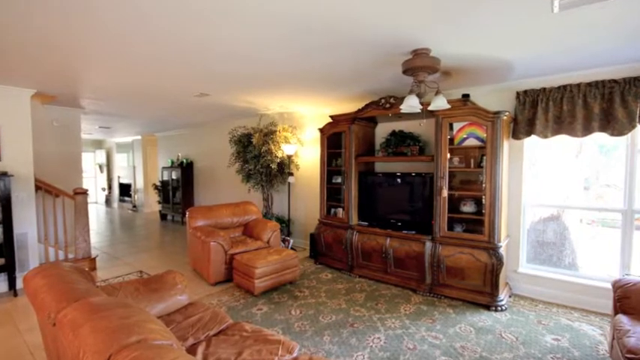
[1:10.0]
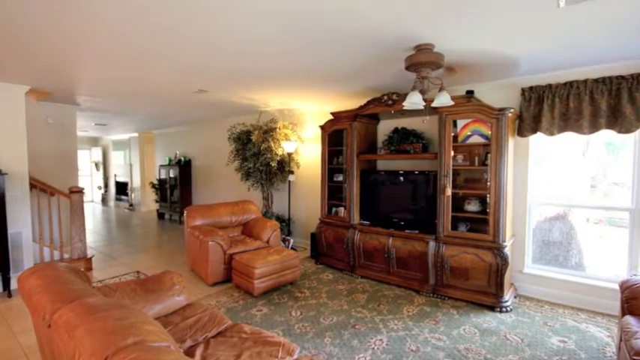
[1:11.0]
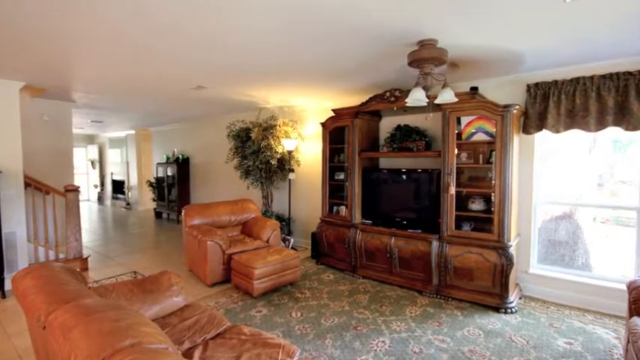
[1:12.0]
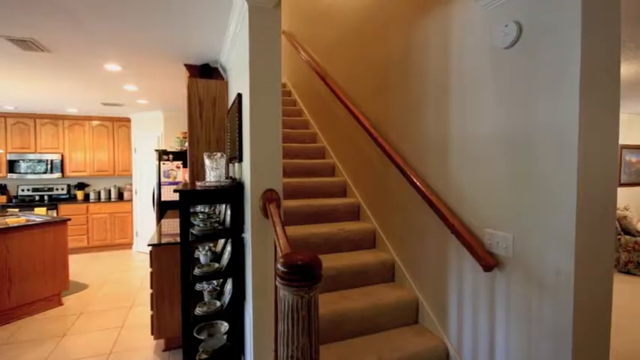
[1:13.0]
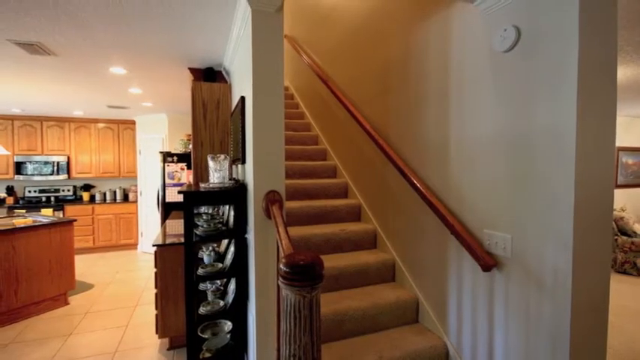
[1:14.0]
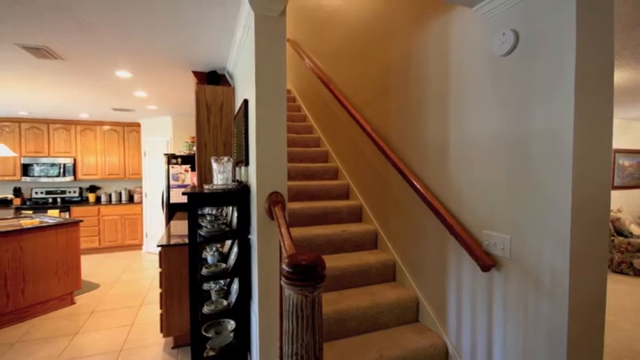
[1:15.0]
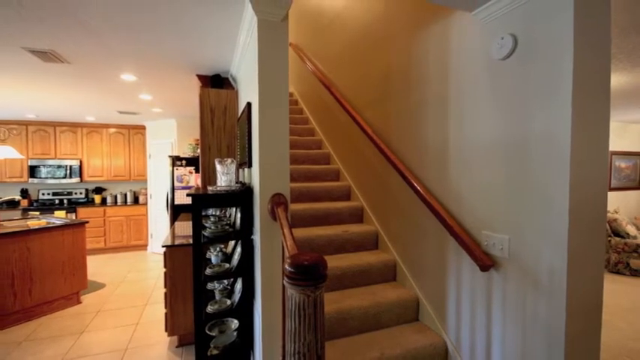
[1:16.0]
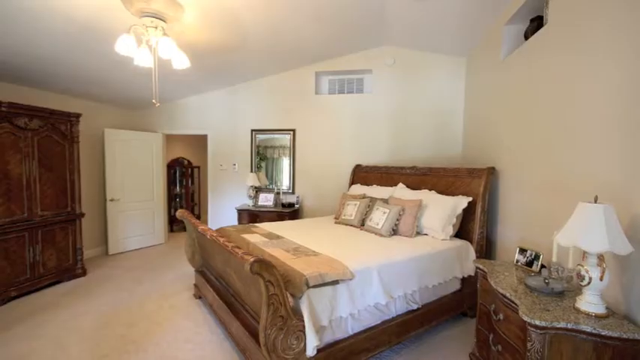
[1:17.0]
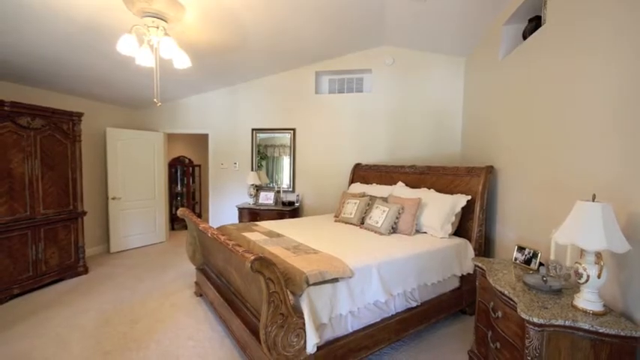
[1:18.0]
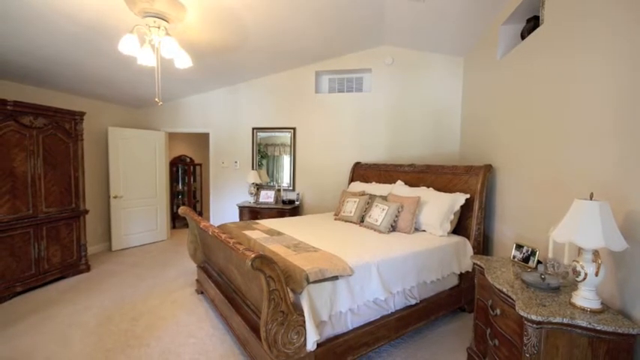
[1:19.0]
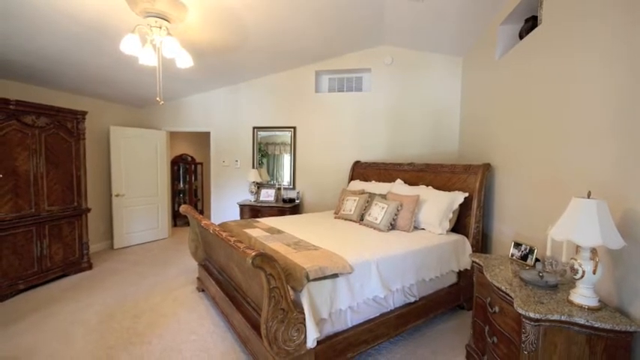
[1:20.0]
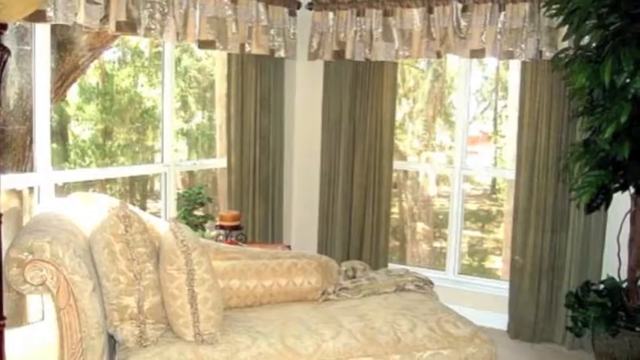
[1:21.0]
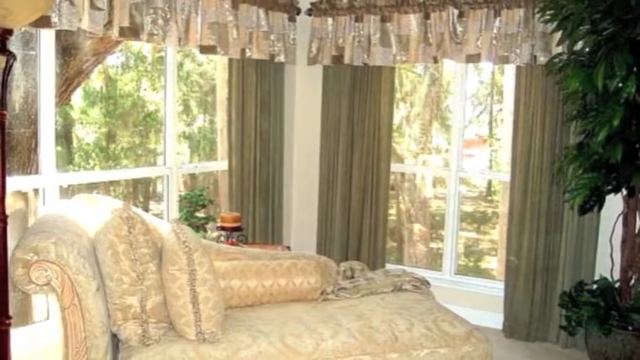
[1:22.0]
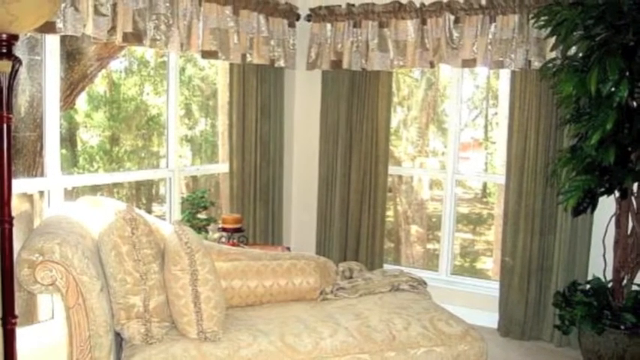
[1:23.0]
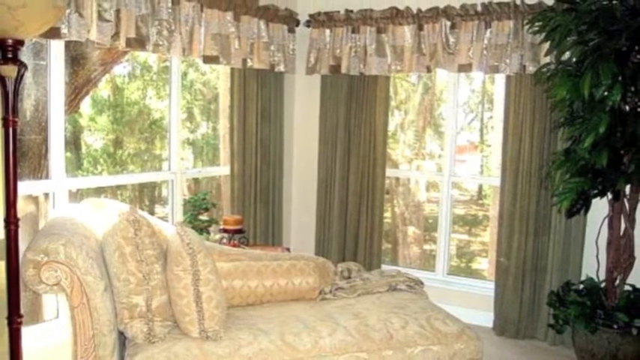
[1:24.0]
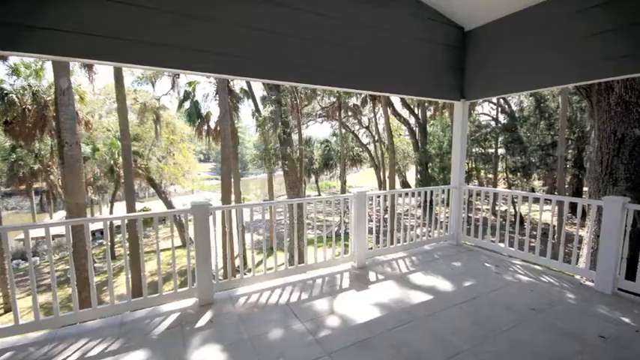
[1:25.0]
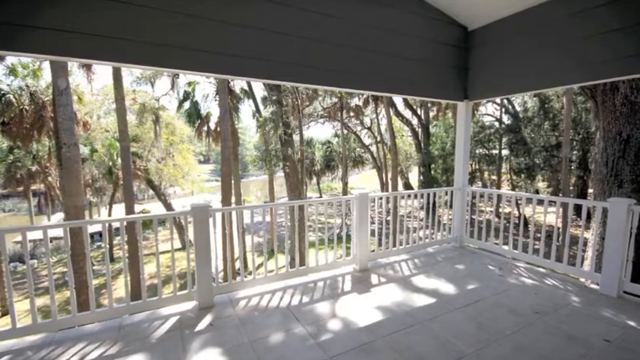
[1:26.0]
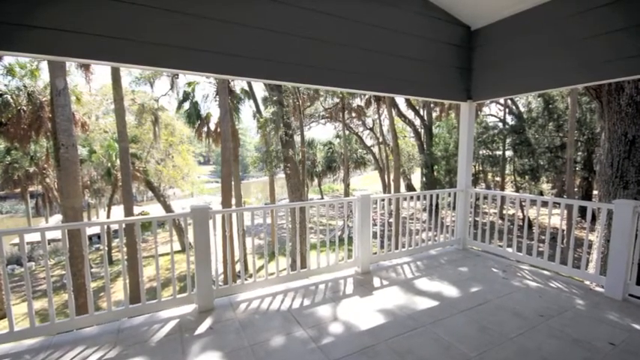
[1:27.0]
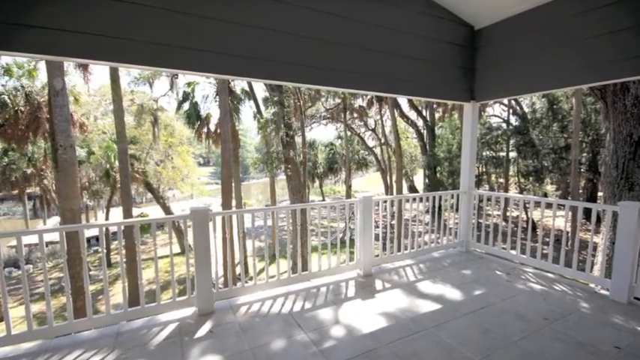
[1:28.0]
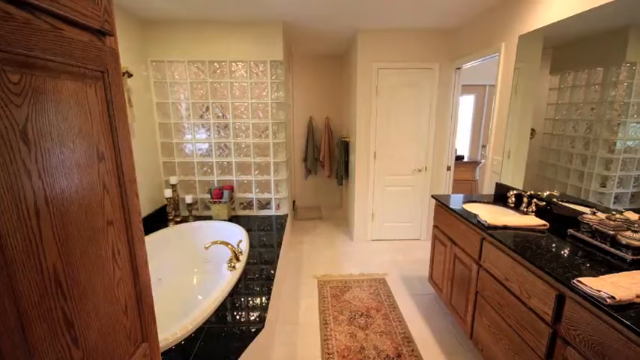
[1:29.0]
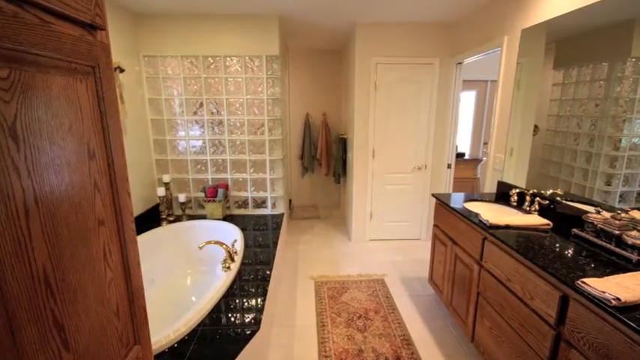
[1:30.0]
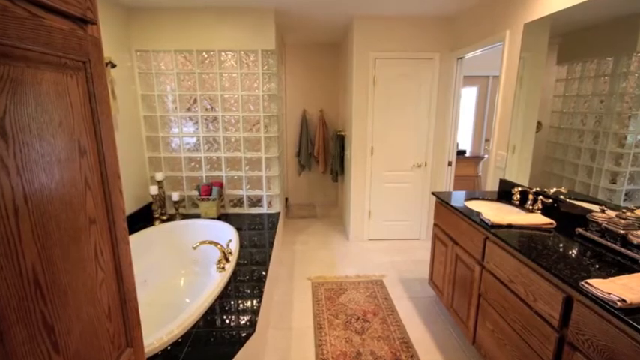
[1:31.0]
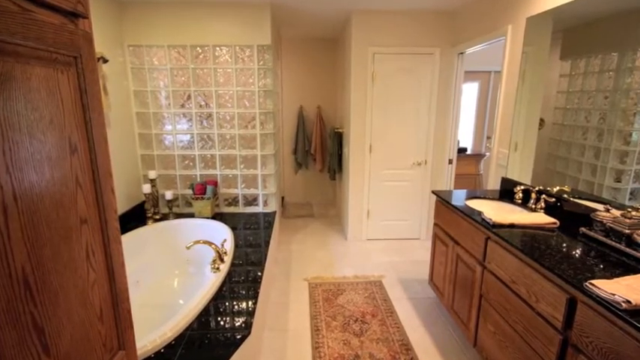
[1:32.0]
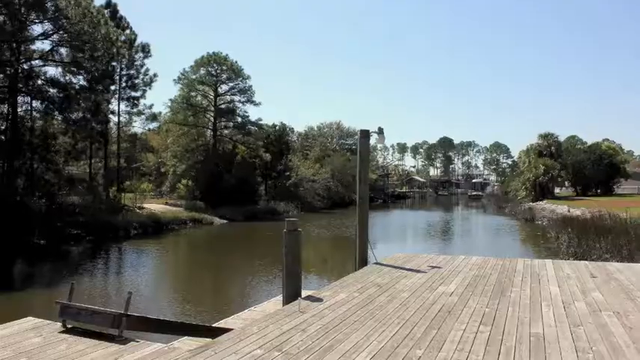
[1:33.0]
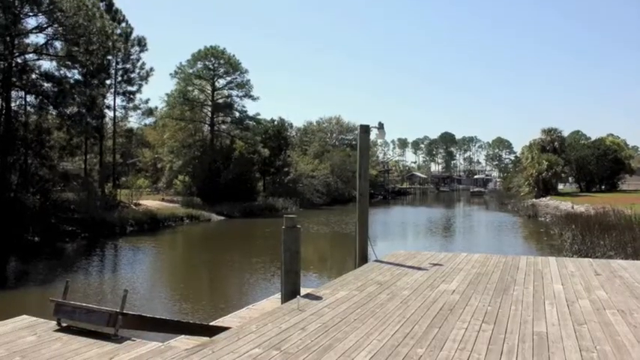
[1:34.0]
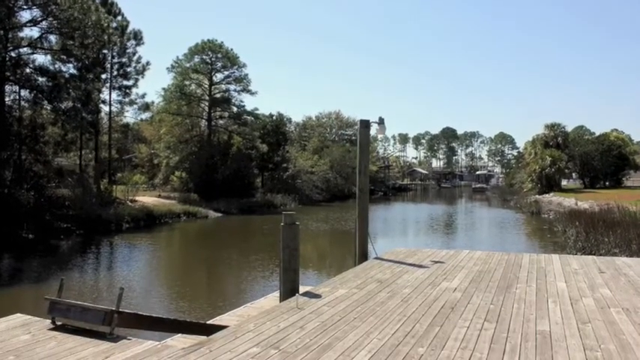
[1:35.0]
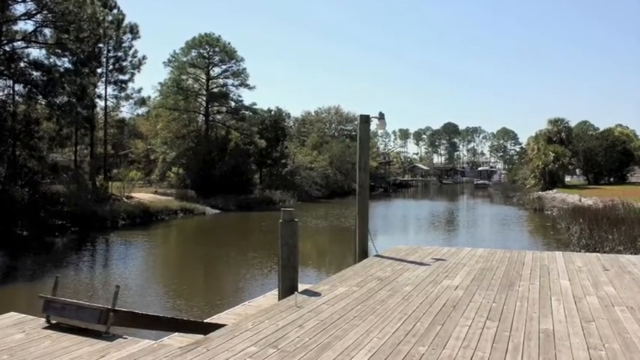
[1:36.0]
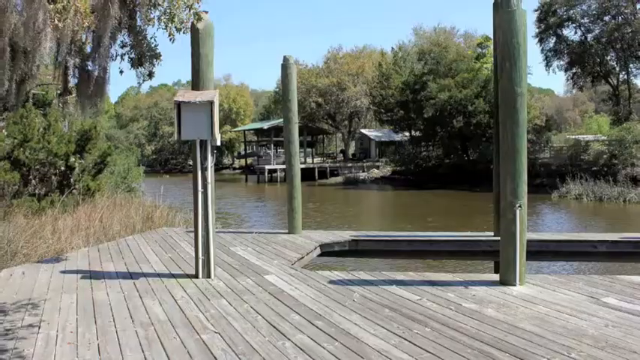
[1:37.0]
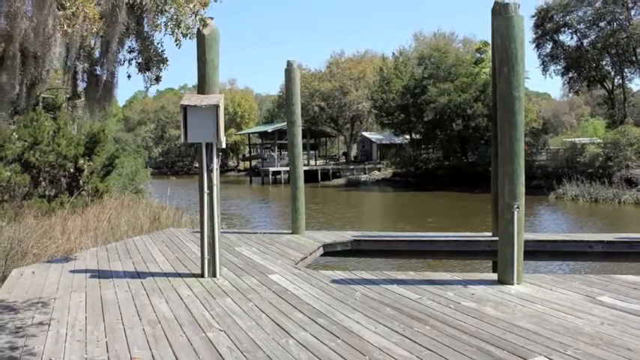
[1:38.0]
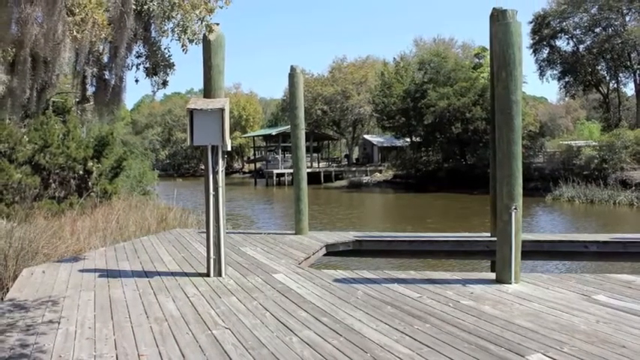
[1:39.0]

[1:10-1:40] The view returns to the large living area, then backs off from a staircase. The camera then looks from a corner of a bedroom into the main body of the room, which has substantial wooden wardrobes, a solid wooden framed bed, and wooden dressers with what look like marble tops. Through the door, more wooden furniture is visible; the furniture all looks to be of very high quality. Some sort of grille or vent in the wall, possibly an air conditioning unit, is set in an alcove, with a matching alcove on the right side wall, and the flooring is light coloured. Another view, apparently still upstairs, shows a large balcony and a well-appointed bathroom with what look like separate bathing and showering facilities. The scene then moves outside to a jetty and what looks like a fishing lake.